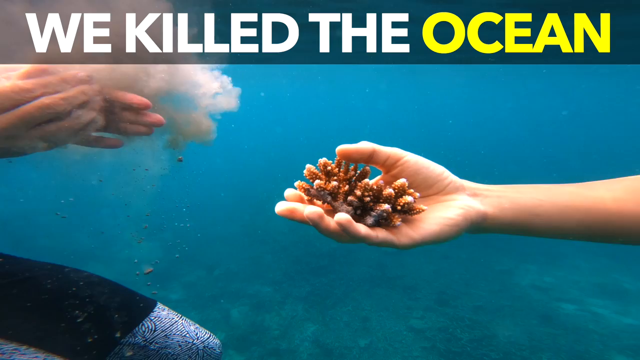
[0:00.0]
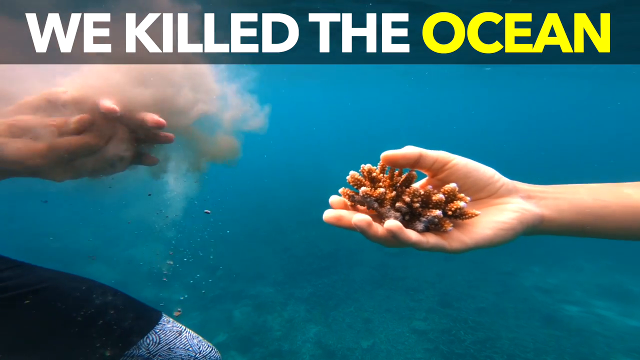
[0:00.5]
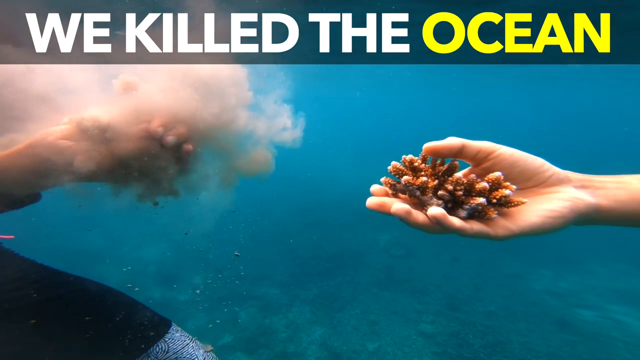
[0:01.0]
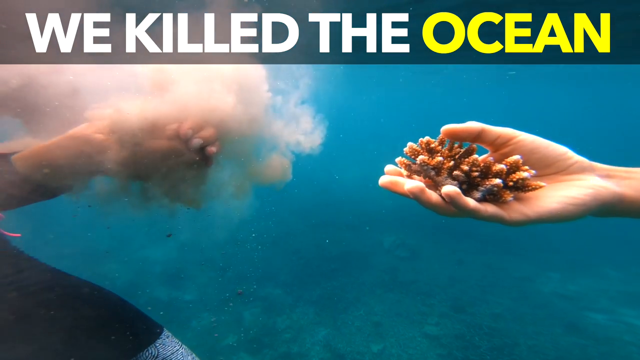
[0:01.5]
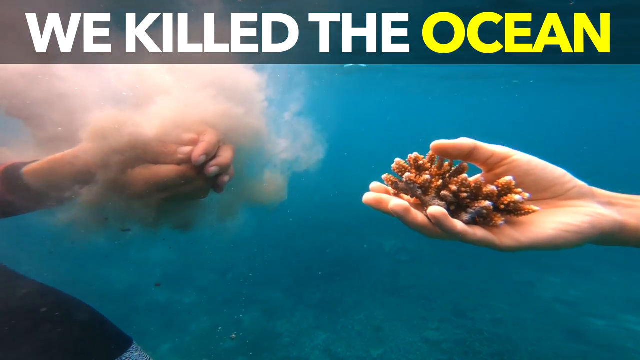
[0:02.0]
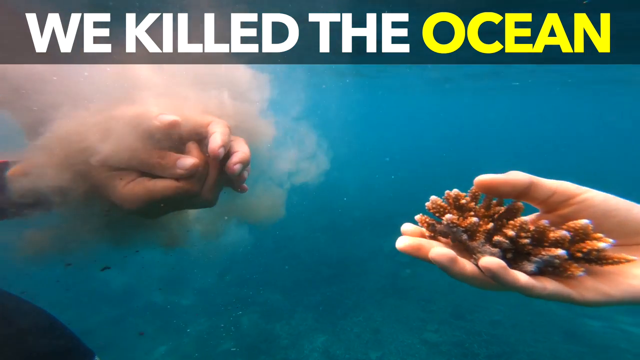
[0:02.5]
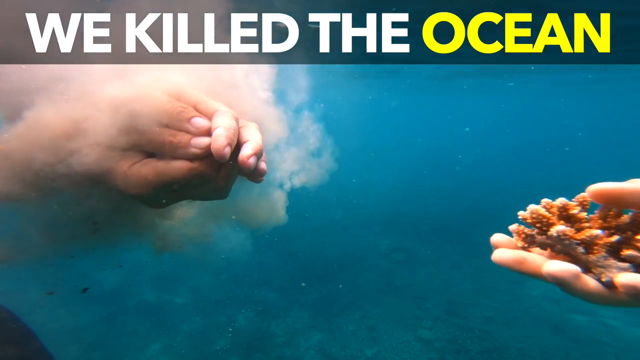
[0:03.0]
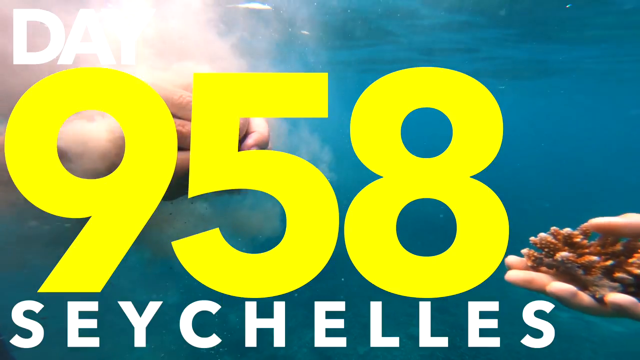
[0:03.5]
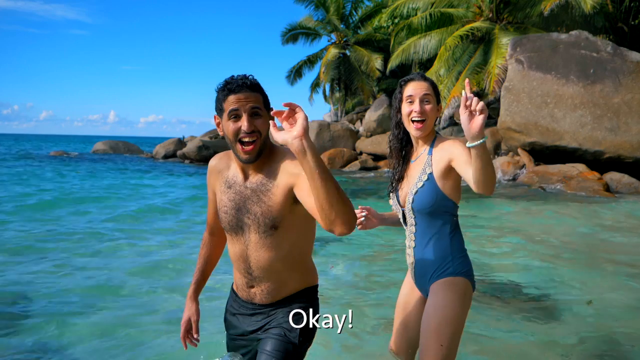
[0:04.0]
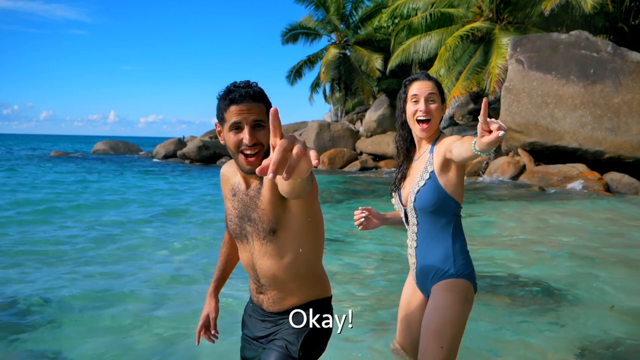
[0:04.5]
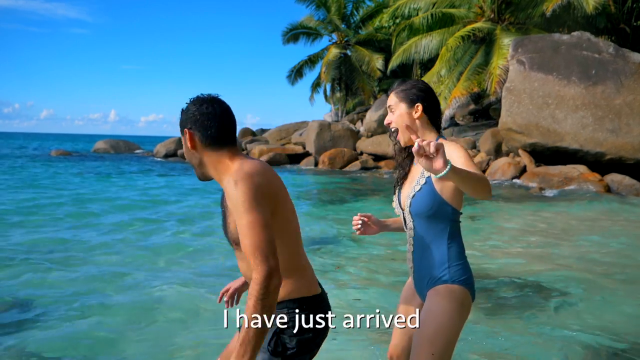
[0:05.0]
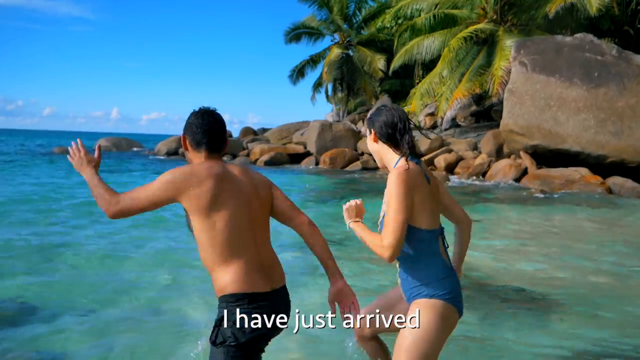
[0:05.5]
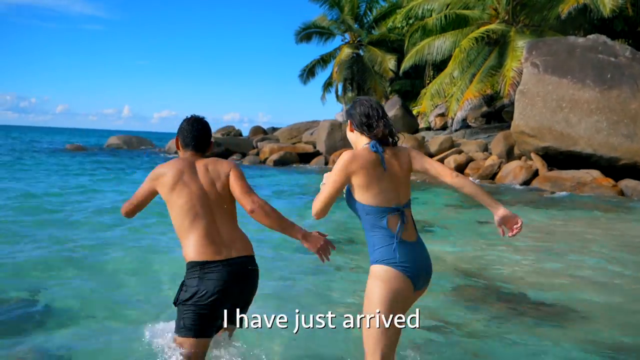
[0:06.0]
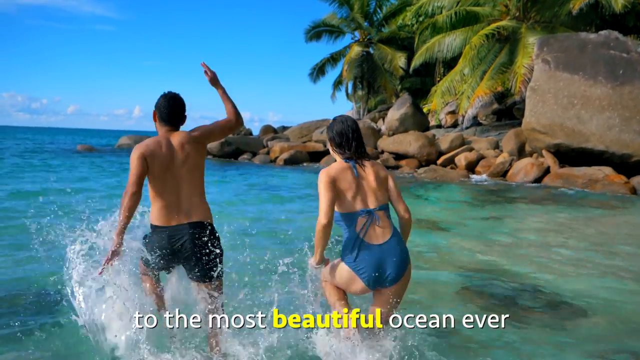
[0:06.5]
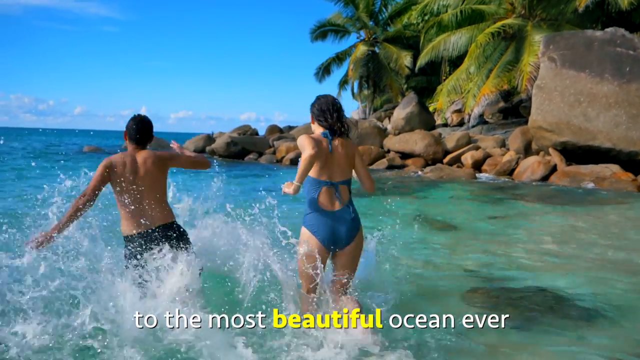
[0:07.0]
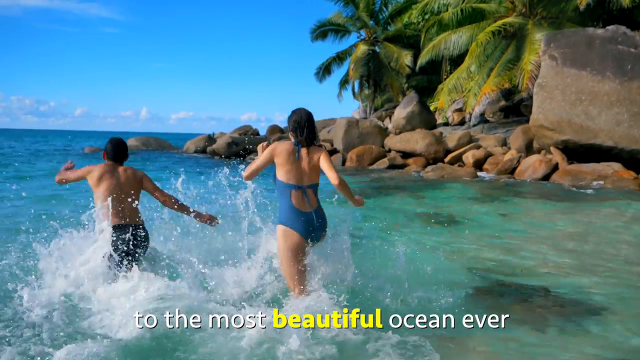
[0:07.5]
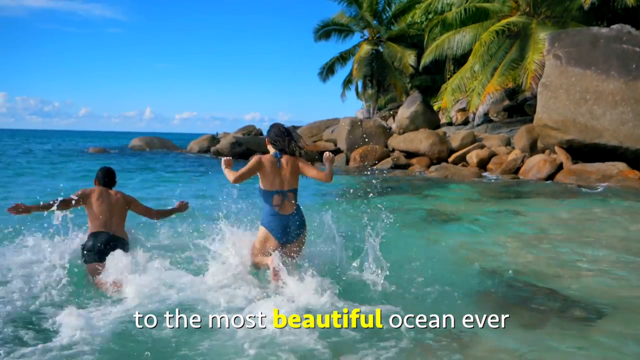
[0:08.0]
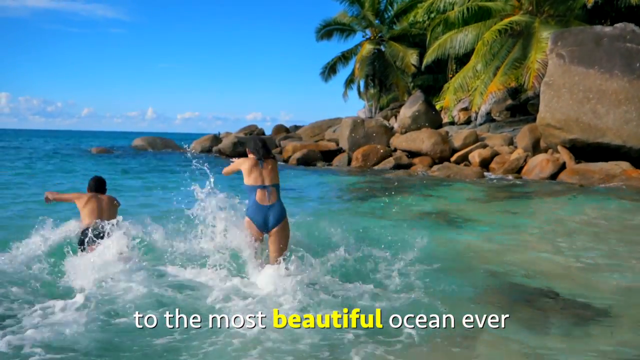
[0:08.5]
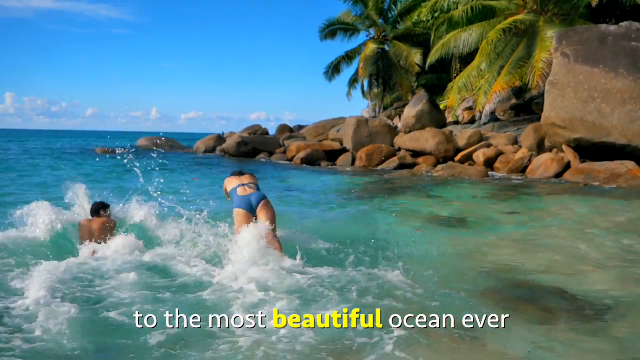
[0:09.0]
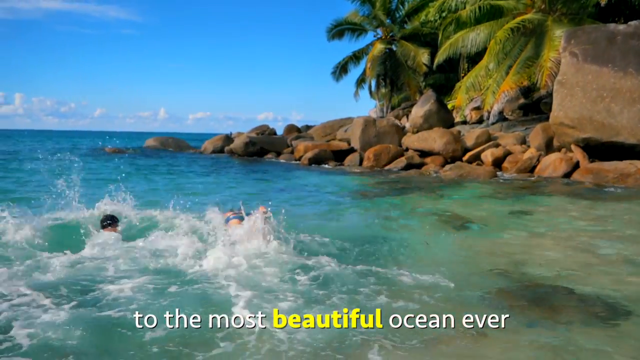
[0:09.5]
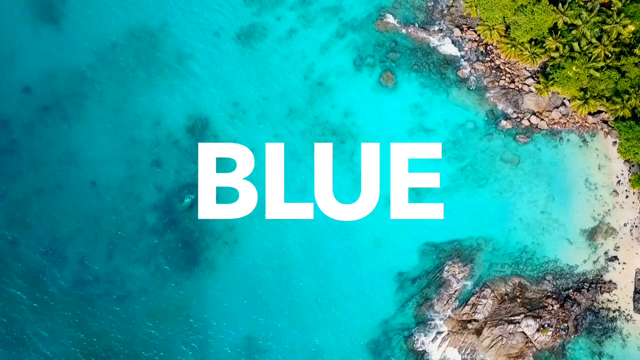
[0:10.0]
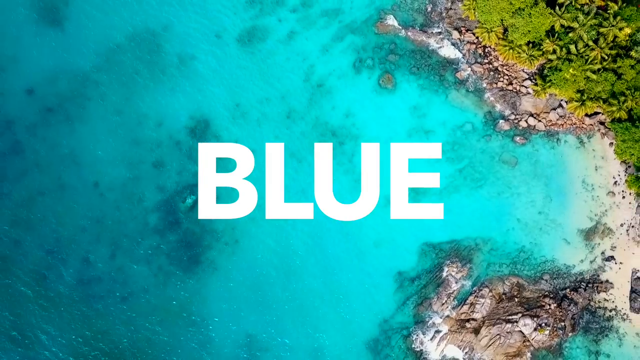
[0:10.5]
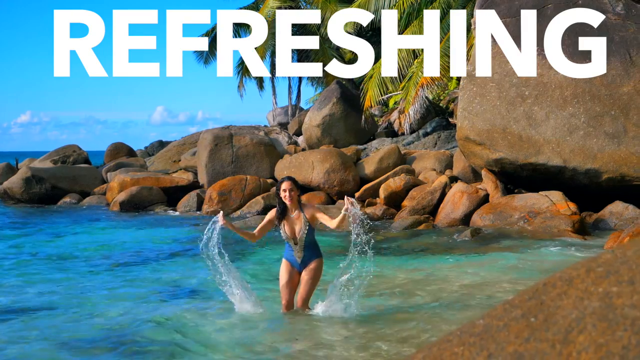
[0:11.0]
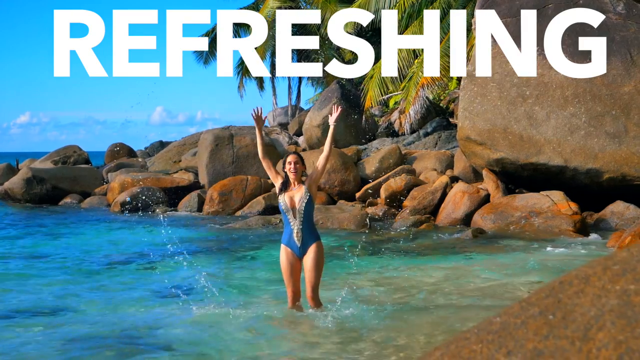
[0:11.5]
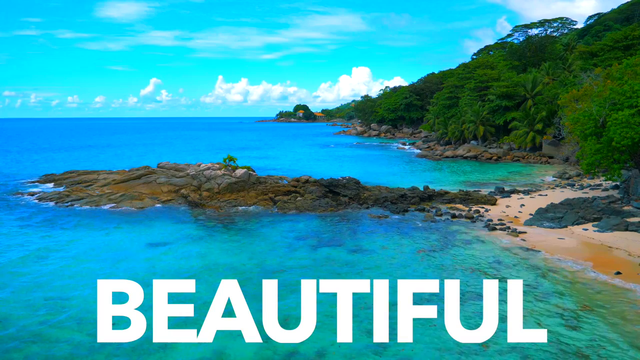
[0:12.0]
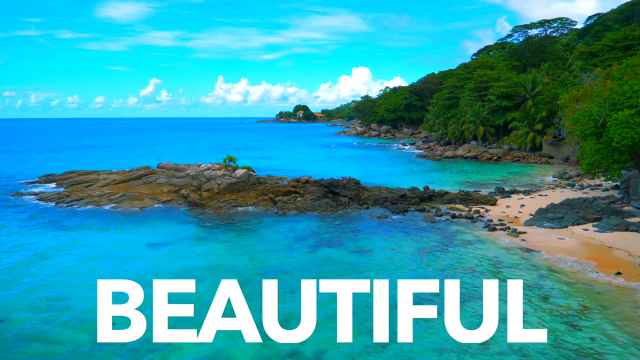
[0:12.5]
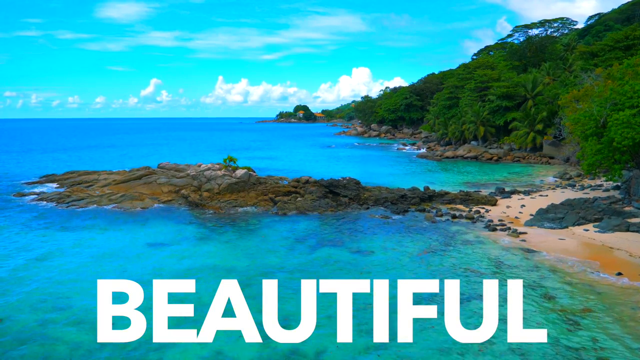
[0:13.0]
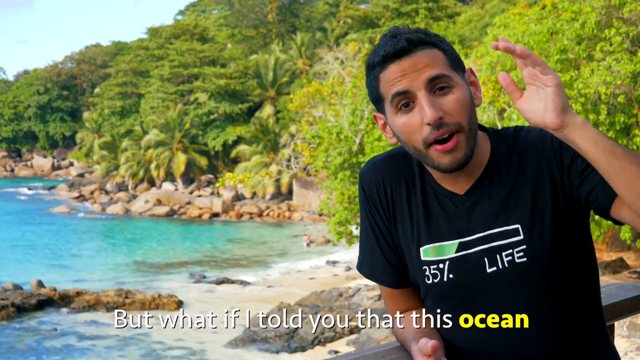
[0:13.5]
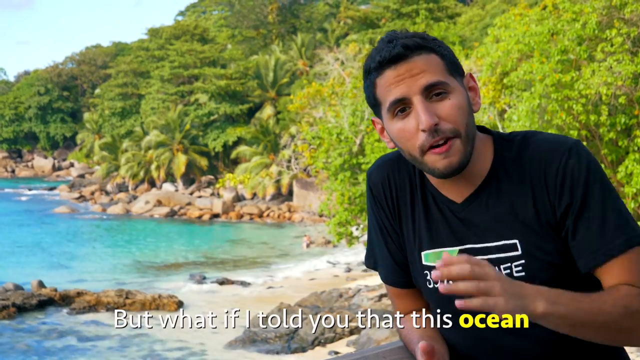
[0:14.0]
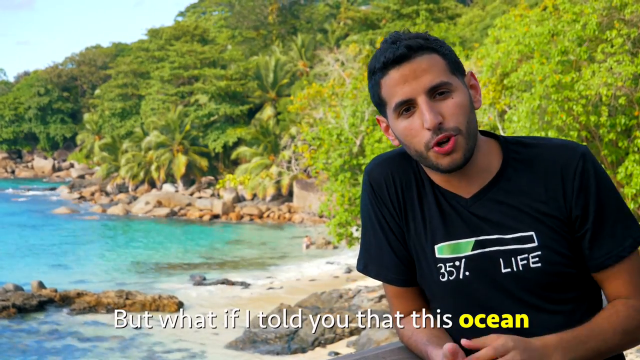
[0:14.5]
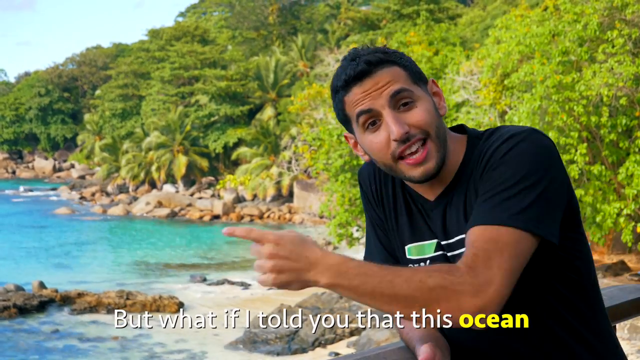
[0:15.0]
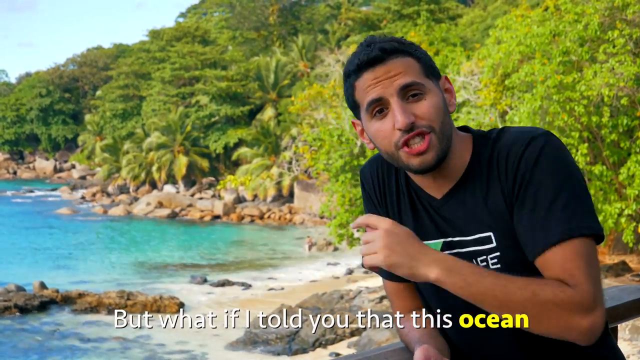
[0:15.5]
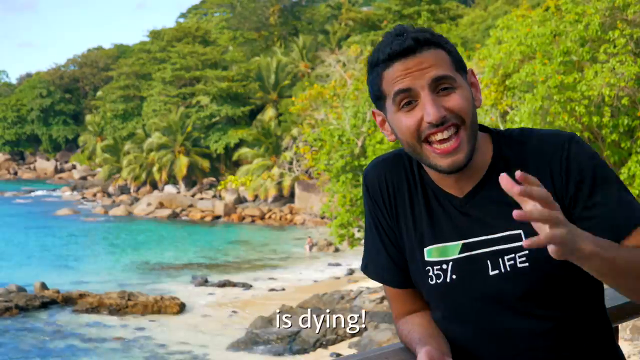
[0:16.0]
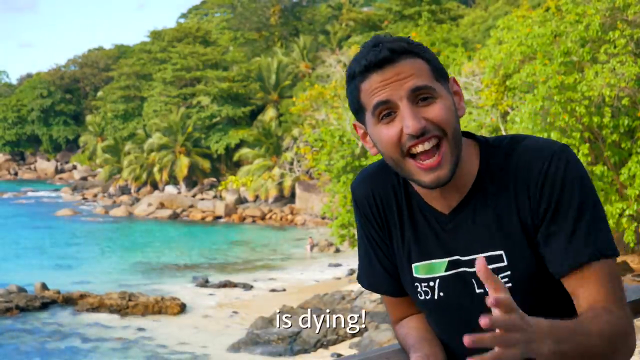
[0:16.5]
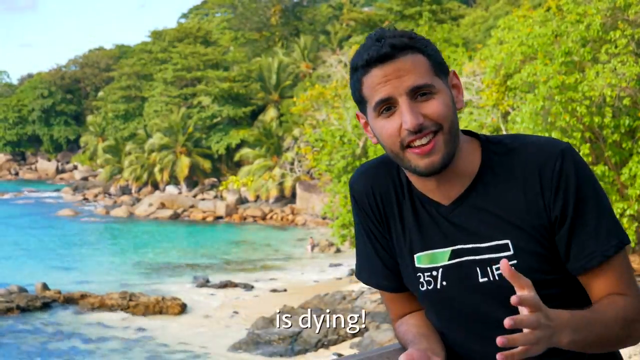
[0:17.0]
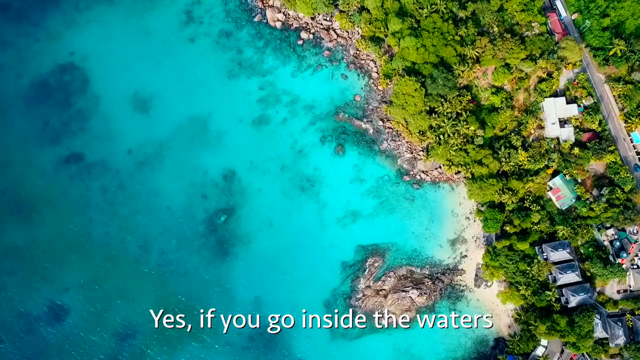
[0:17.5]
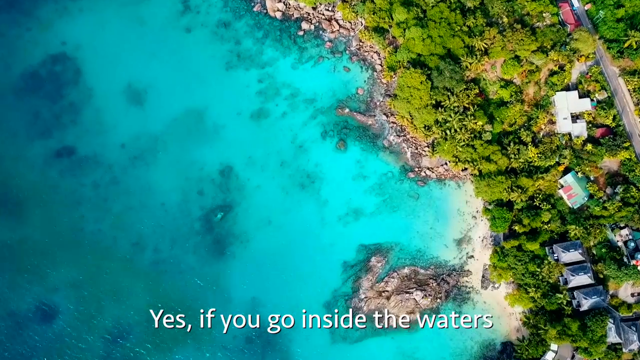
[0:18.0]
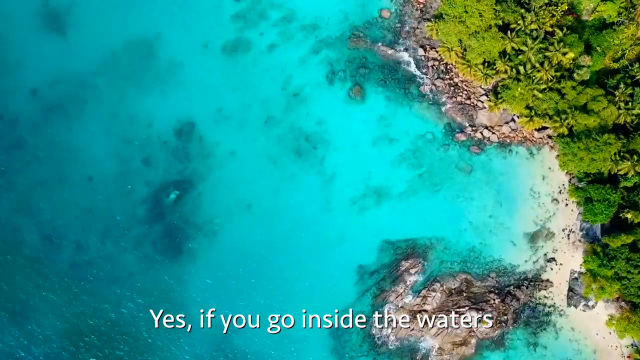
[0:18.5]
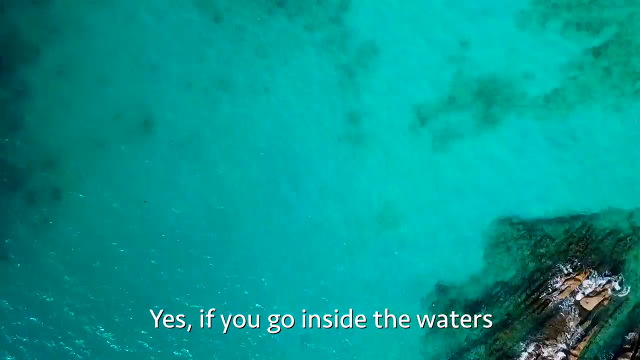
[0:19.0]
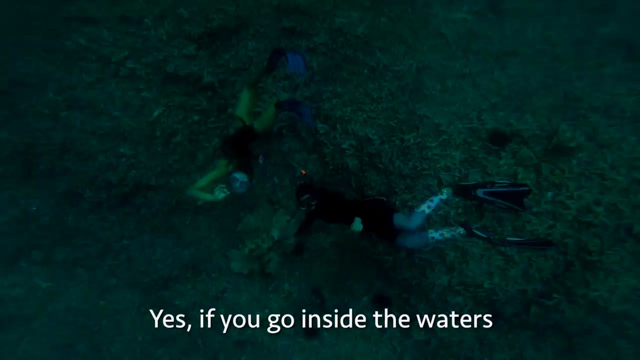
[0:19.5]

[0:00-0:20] The title "We Killed the Ocean" appears in a large, bold, capital sans-serif font. The video opens with an underwater shot of hands: a female hand holds a coral, and a male hand, with two hands, clasps some wet sand that sort of drifts through his fingertips, apparently in slow motion. Next, two people, a male and a female, are on the beach with their fingers up, and the text "this is the most beautiful ocean ever" appears as they dive into the water in slow motion. The text "We Killed the Ocean" appears with the shot inside the water. Large, bold text reads "9.58 Seychelles", "it's the most beautiful ocean ever", and "blue", "refreshing" and "beautiful". The man says, "what if I told you this ocean is dying?" while gesticulating wildly, or at least forcefully, to make his point.